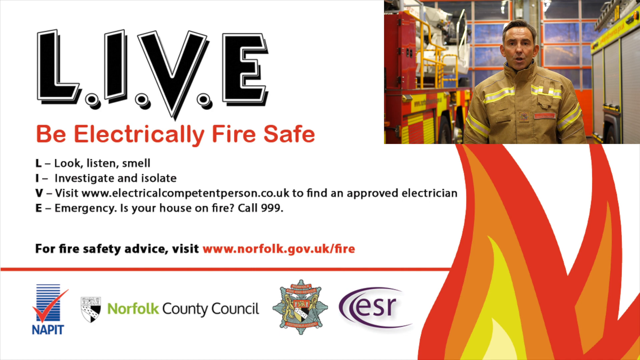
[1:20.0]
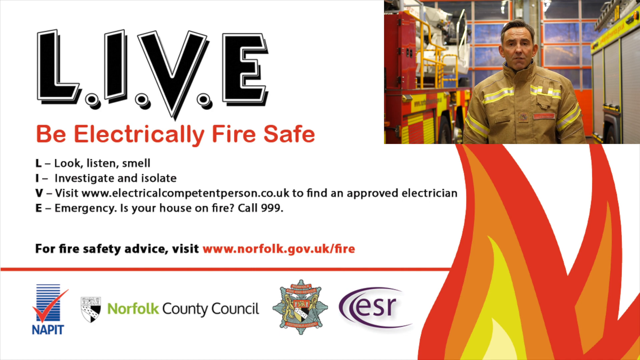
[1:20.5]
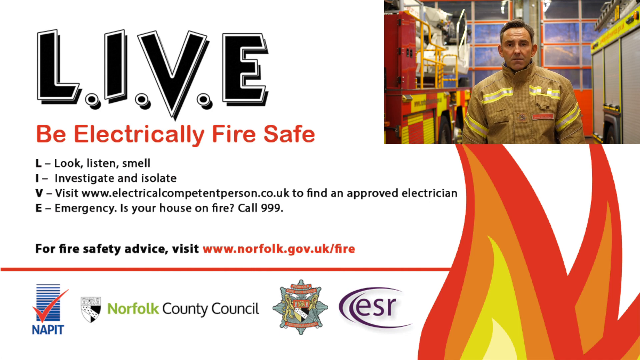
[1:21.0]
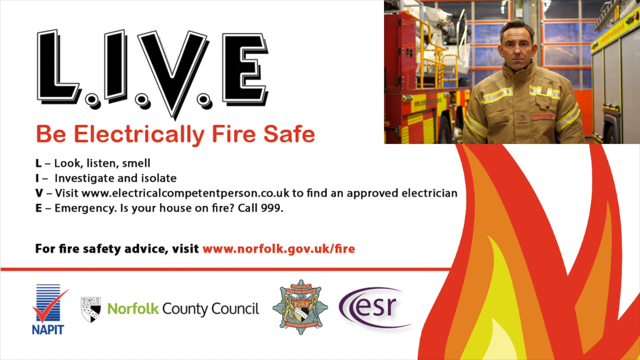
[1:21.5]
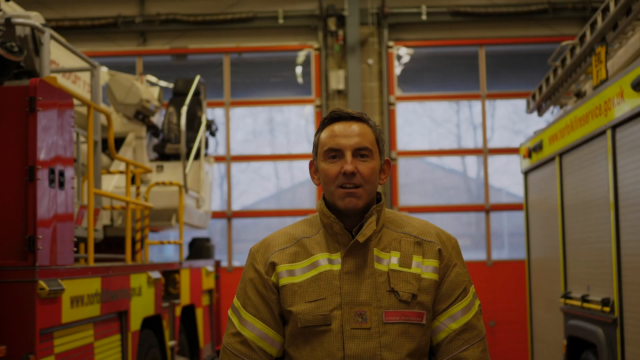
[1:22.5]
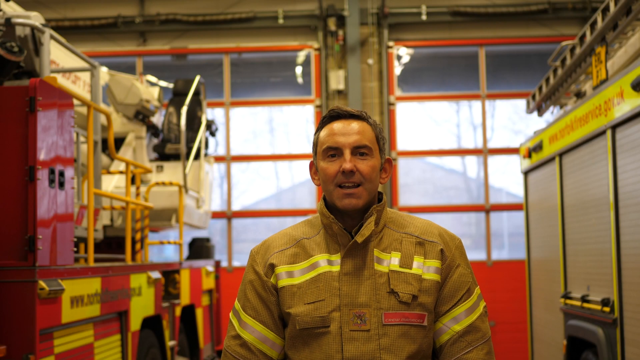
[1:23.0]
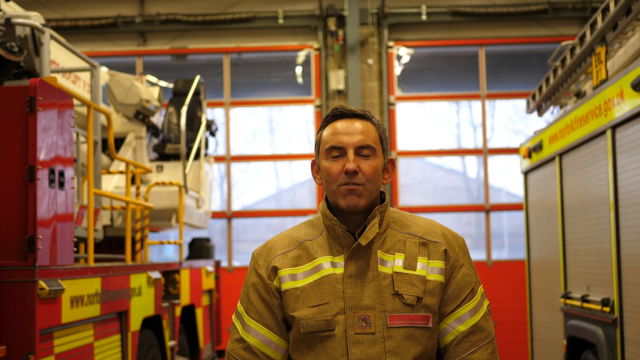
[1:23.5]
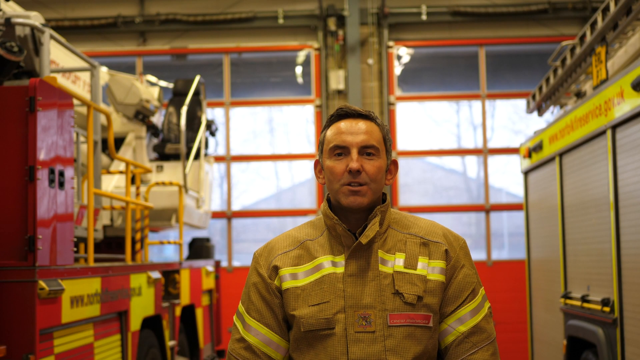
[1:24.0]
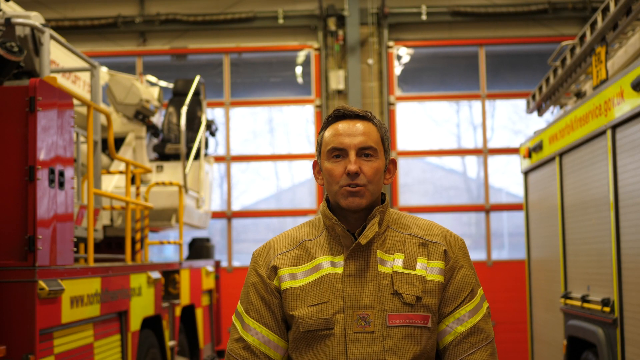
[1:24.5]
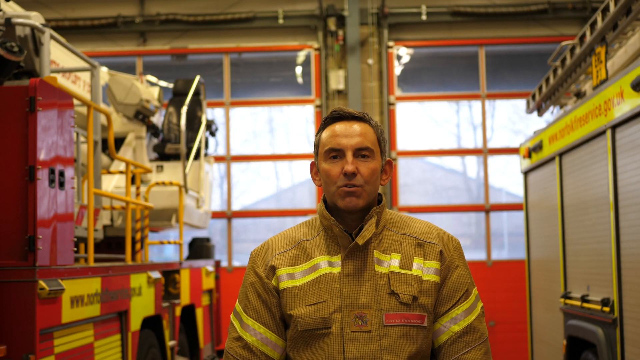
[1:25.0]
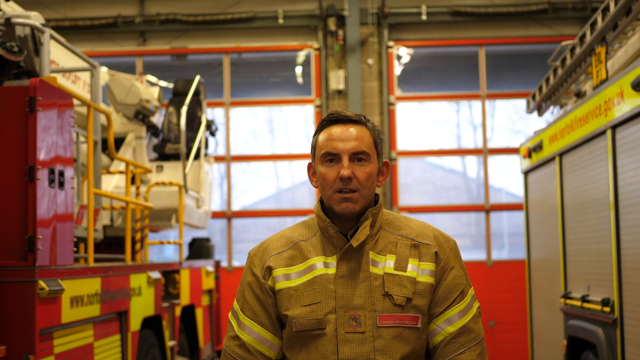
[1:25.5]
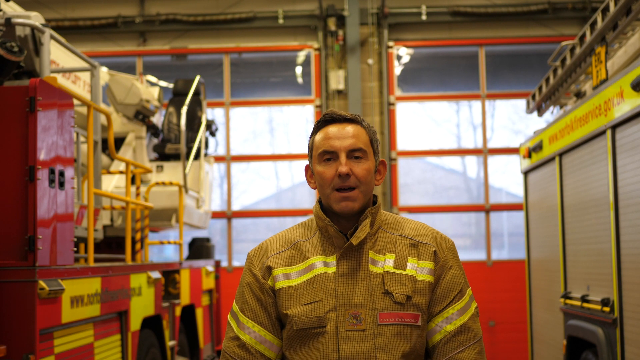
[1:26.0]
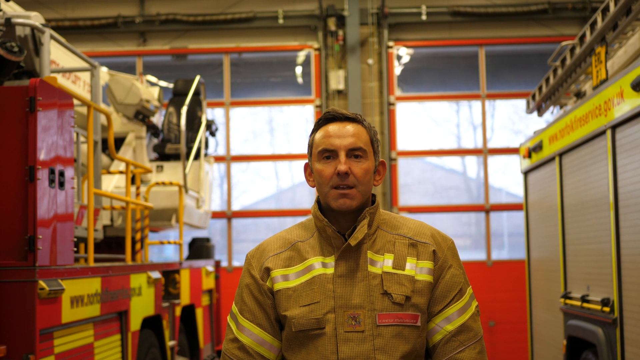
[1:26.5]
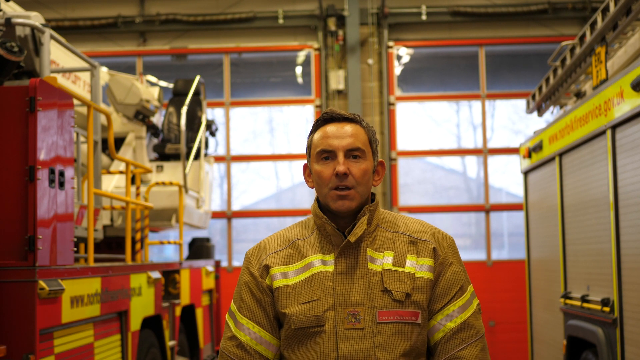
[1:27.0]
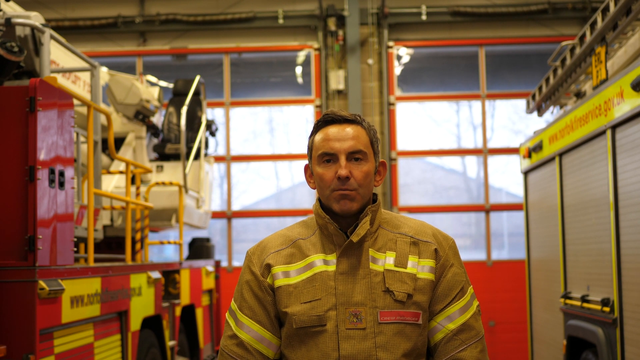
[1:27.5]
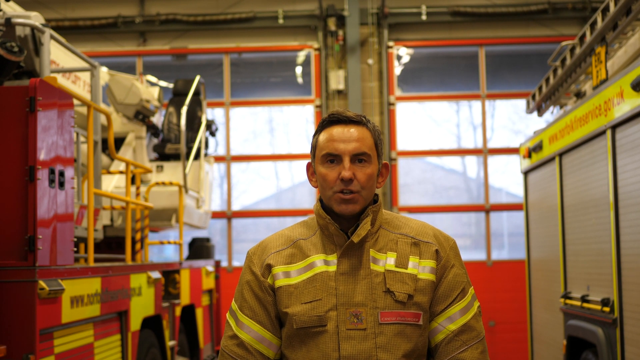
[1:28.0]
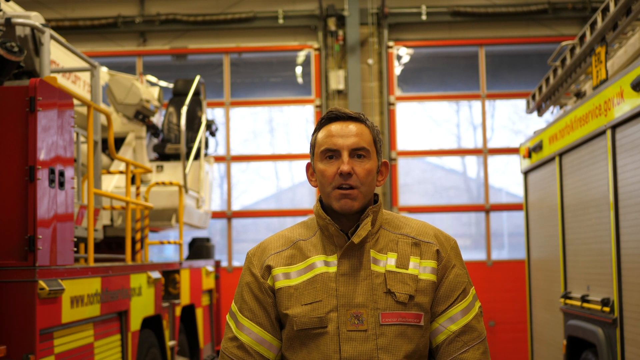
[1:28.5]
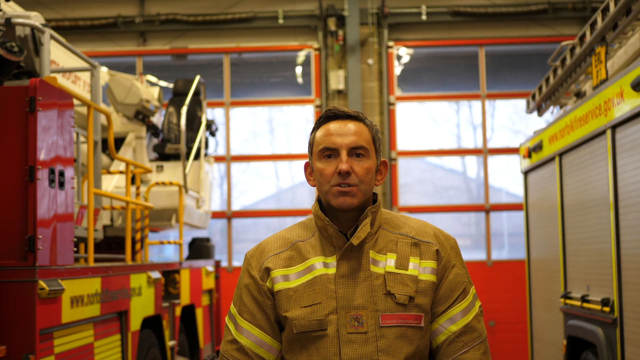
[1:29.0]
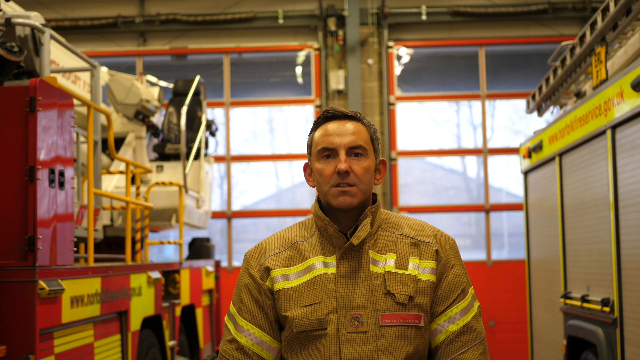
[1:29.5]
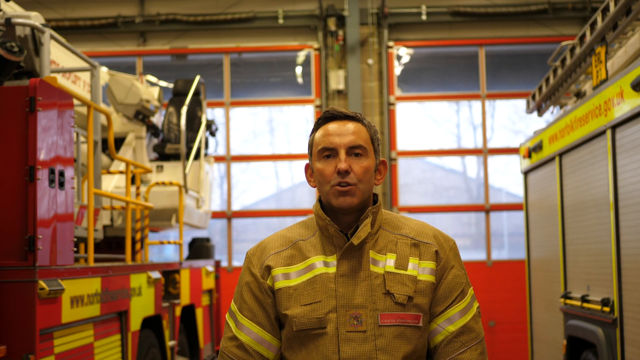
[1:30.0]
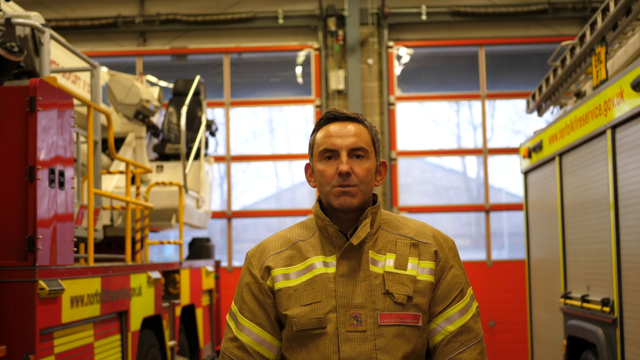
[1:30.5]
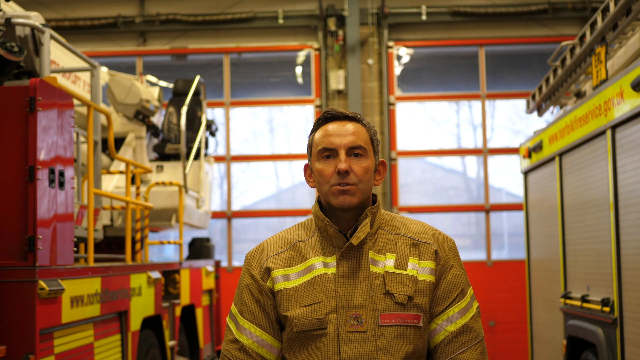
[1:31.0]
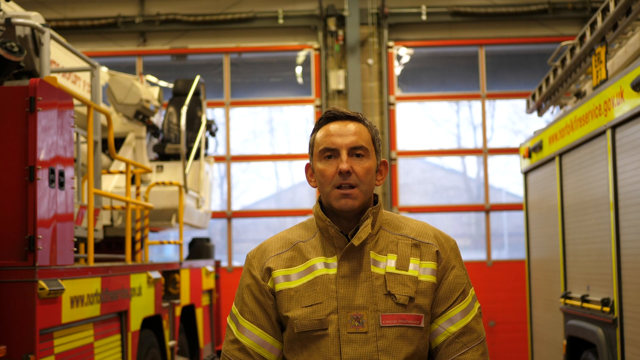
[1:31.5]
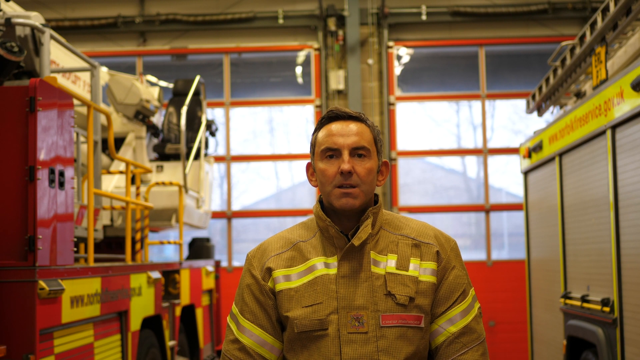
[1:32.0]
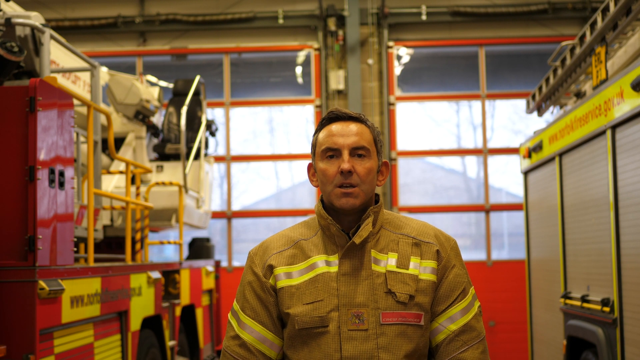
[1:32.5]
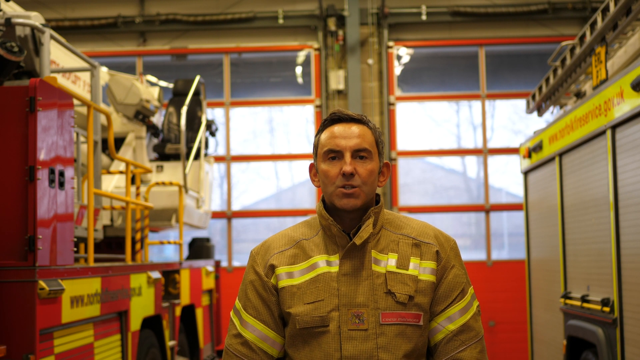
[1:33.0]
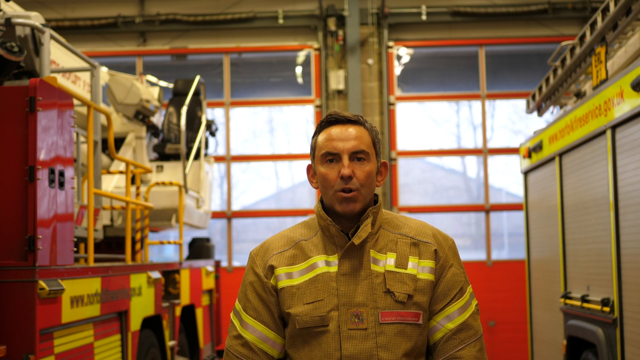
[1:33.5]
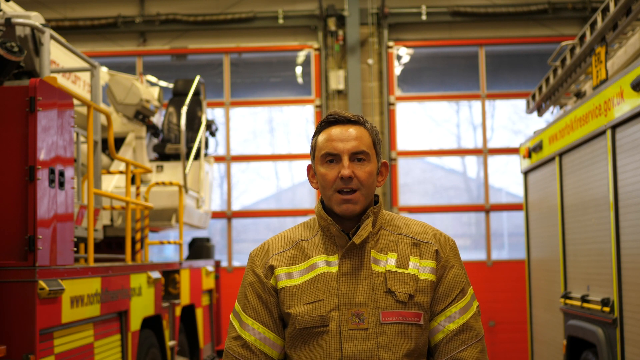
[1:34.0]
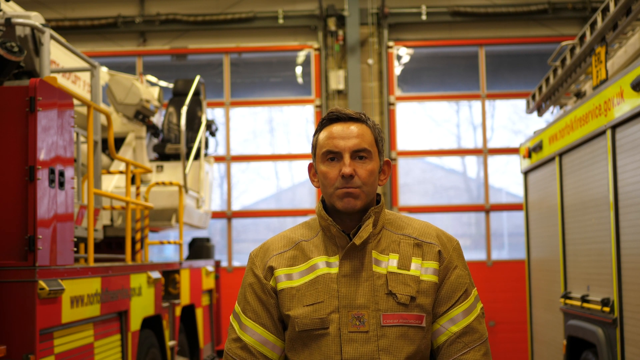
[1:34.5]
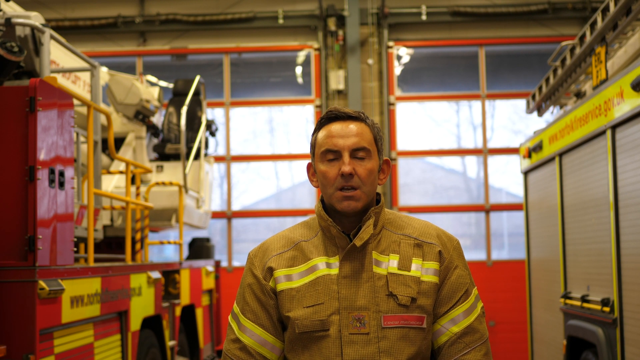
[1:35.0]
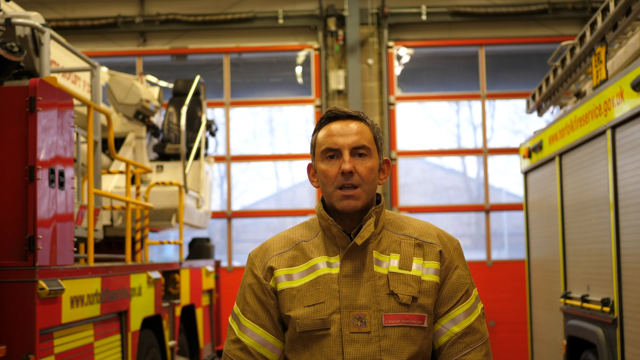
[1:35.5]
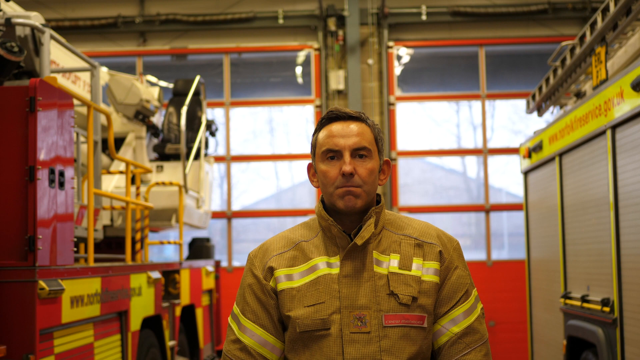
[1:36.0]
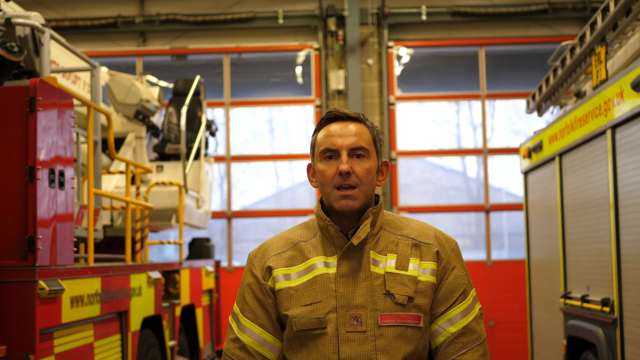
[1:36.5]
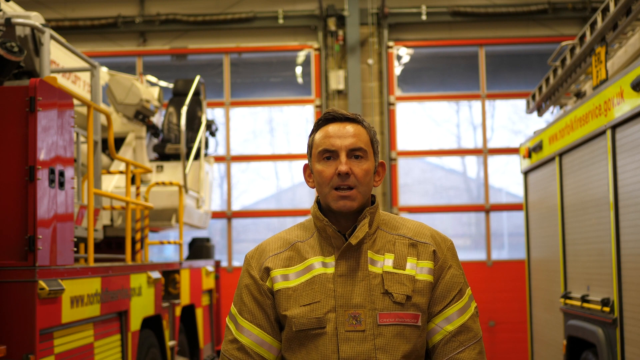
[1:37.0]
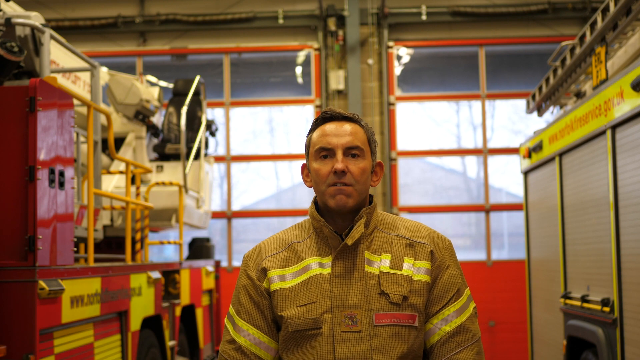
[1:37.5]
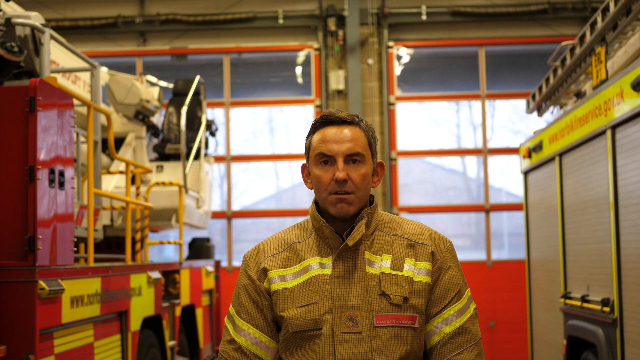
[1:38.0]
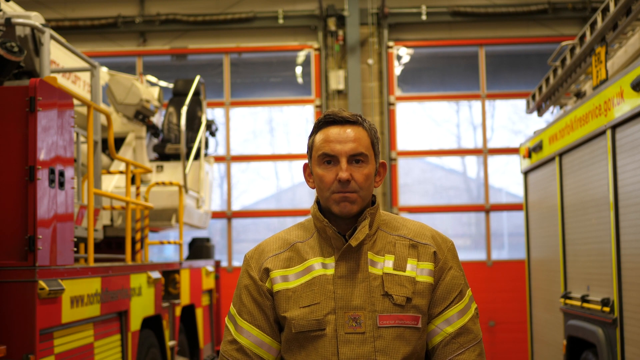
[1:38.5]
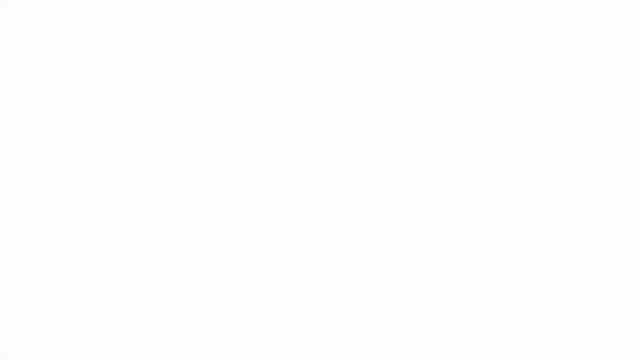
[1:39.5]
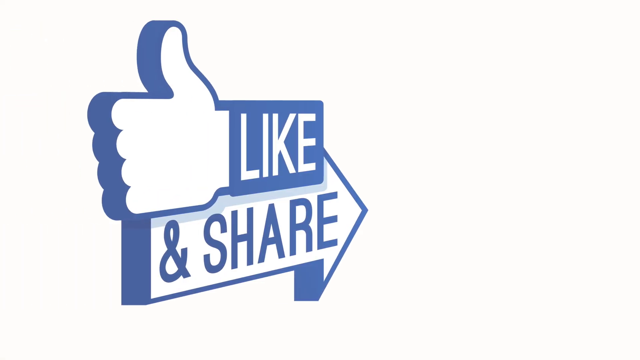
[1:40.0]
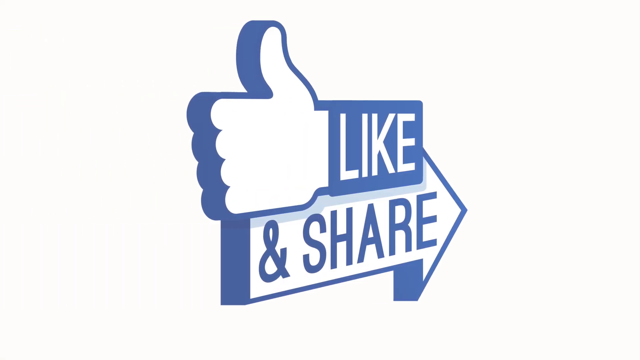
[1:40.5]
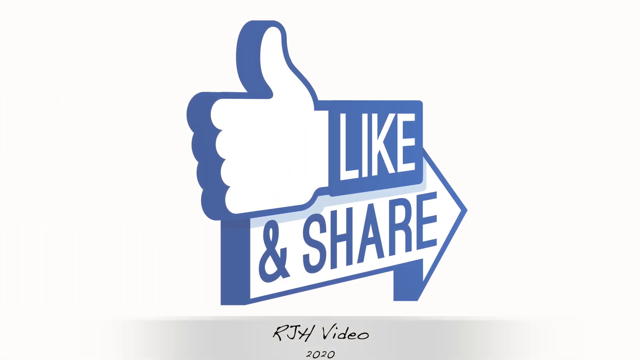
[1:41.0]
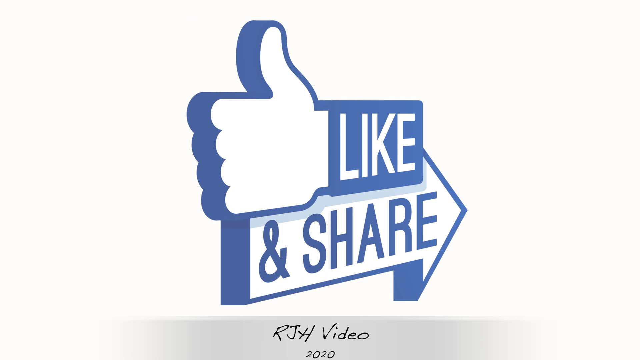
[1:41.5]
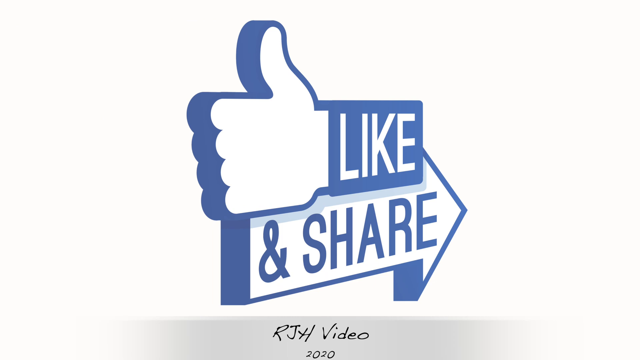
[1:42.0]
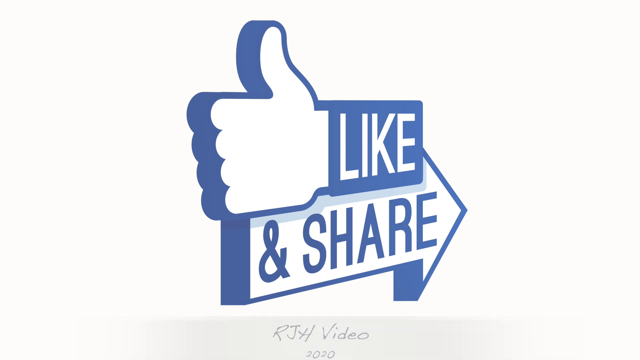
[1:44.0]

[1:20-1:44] The screen cuts back to the firefighter speaking in the middle of the screen. He wears his beige jacket with reflective strips at the front just beneath his shoulders, two reflective strips across his arms, and a red rectangle on the front. To his right is a fire engine with a ladder on top and a yellow stripe across the top of the engine. Behind him are two red fire doors. To his left is another emergency vehicle with red and yellow checks on the bottom and yellow bars on the side. The screen then changes to a thumbs up pointing to the left and an arrow pointing to the right, with "like" and "share" written on them. This logo is blue around the edges and white in the centre, and it slides into the screen from the left-hand side to the centre.